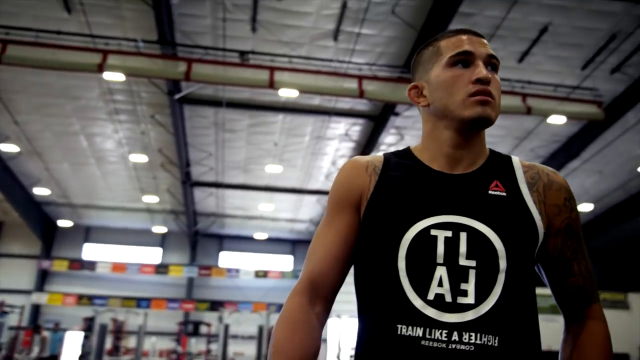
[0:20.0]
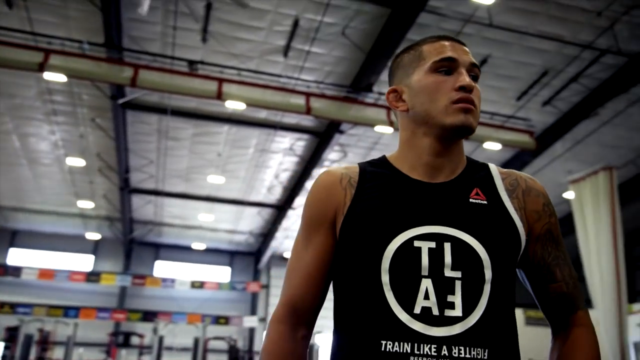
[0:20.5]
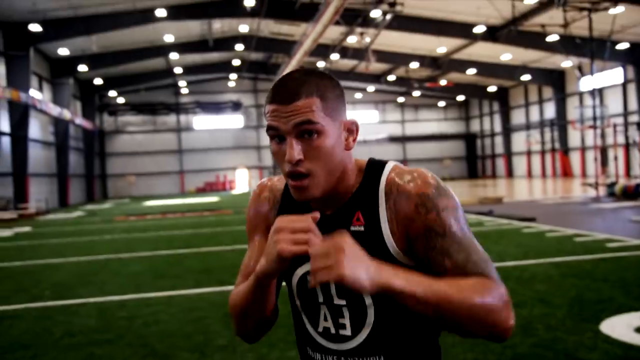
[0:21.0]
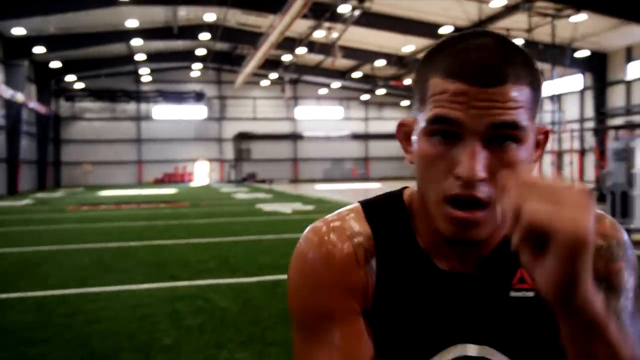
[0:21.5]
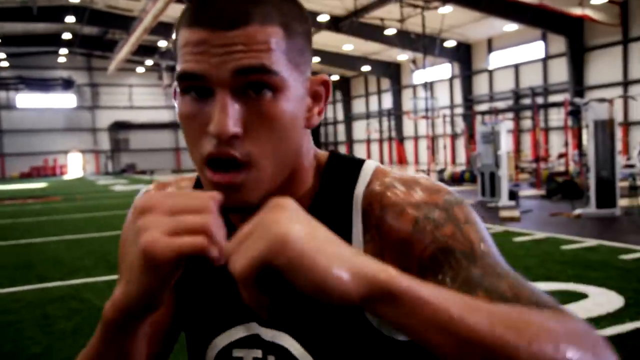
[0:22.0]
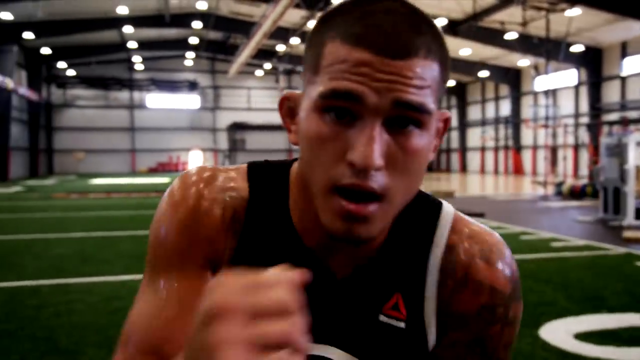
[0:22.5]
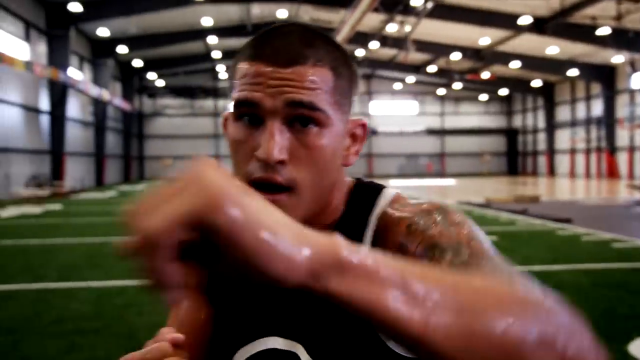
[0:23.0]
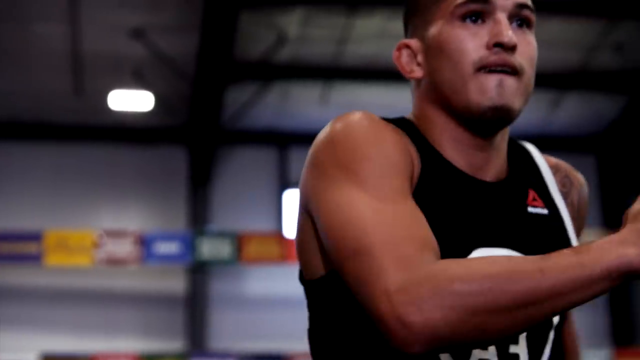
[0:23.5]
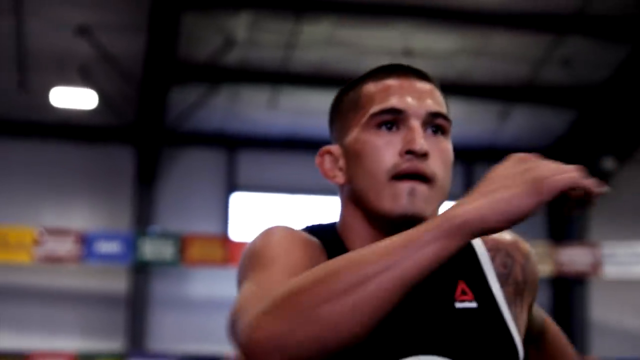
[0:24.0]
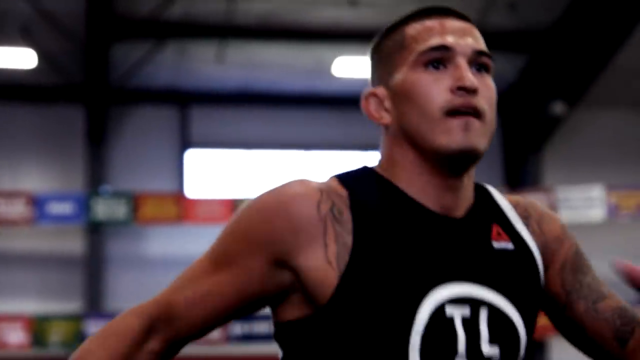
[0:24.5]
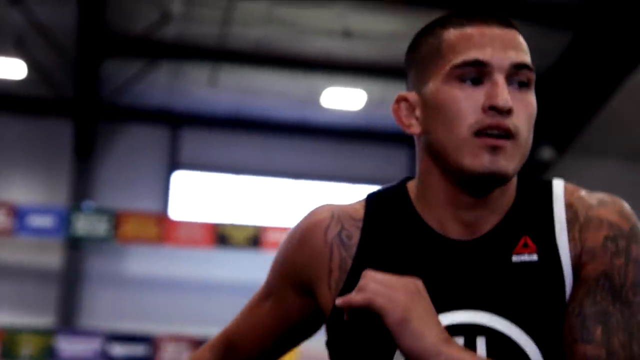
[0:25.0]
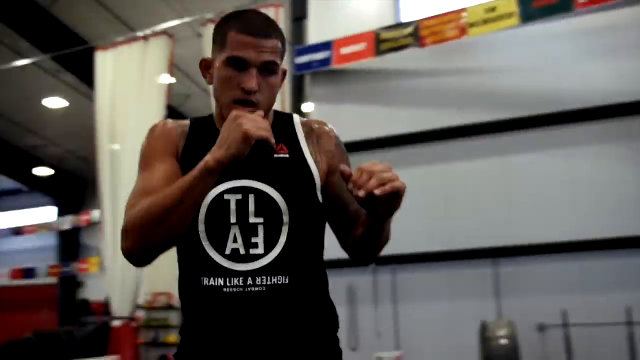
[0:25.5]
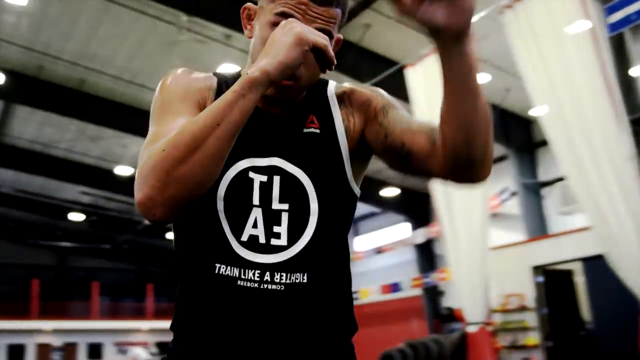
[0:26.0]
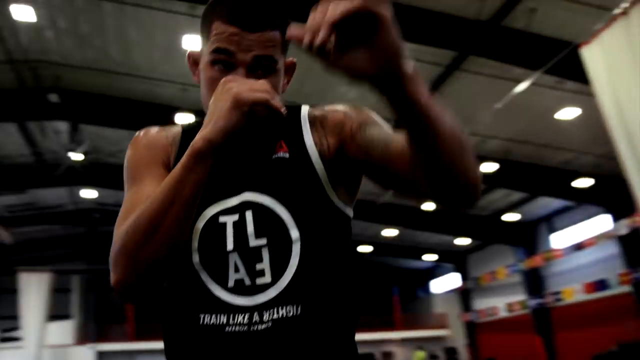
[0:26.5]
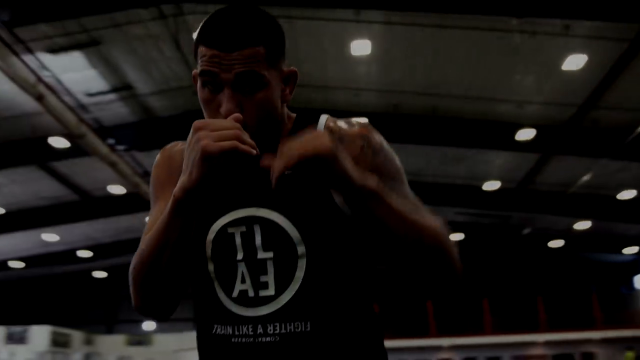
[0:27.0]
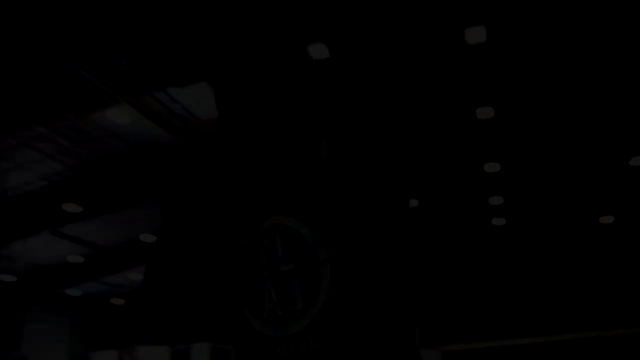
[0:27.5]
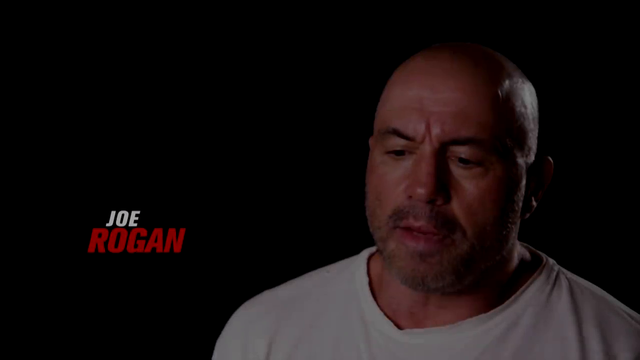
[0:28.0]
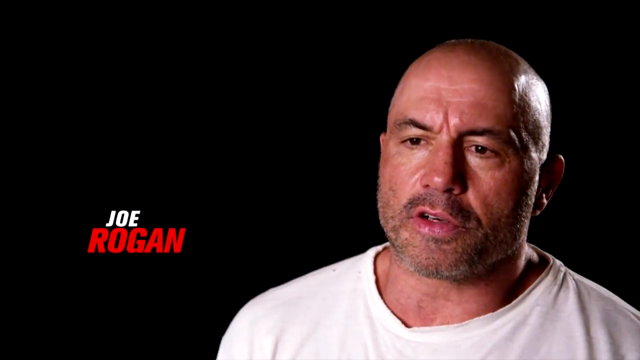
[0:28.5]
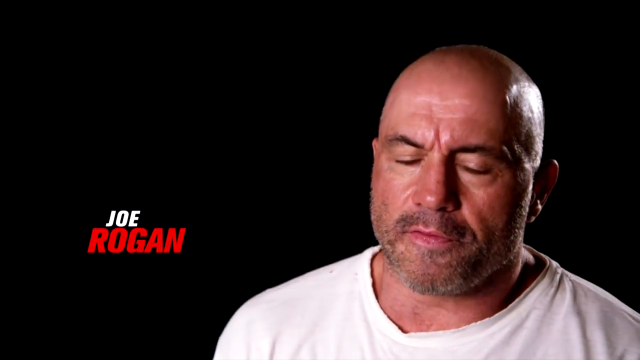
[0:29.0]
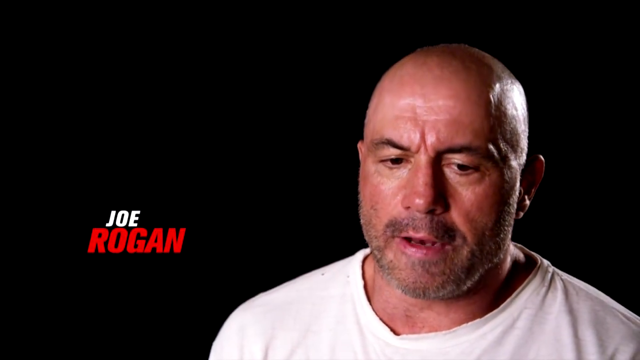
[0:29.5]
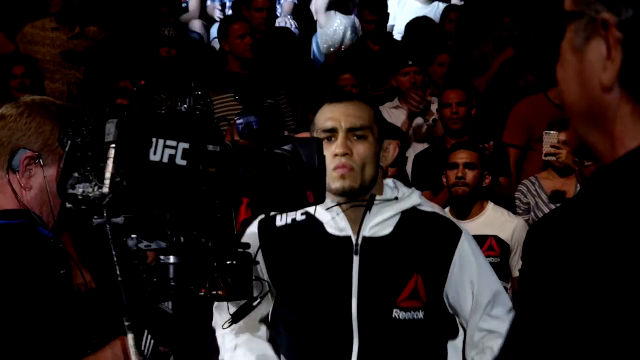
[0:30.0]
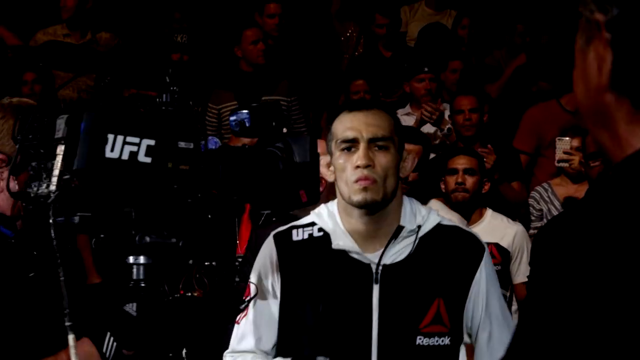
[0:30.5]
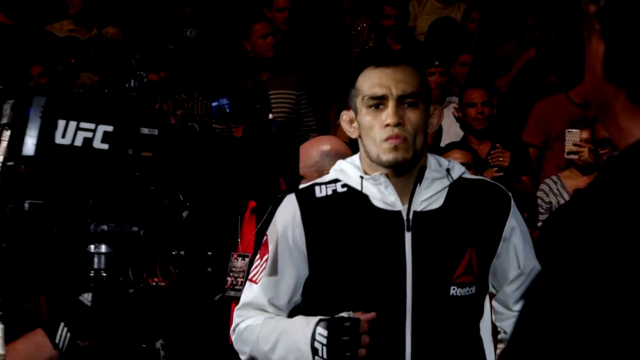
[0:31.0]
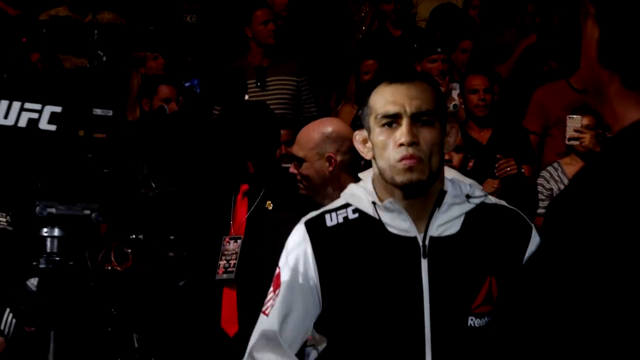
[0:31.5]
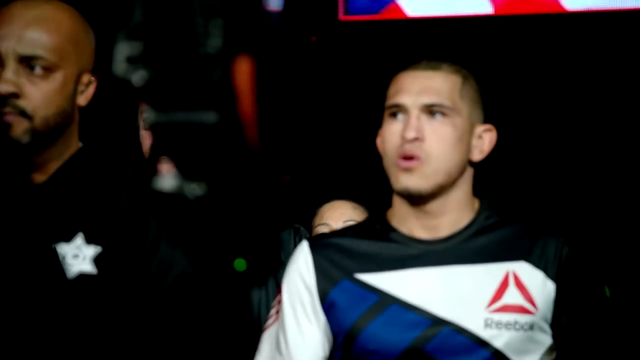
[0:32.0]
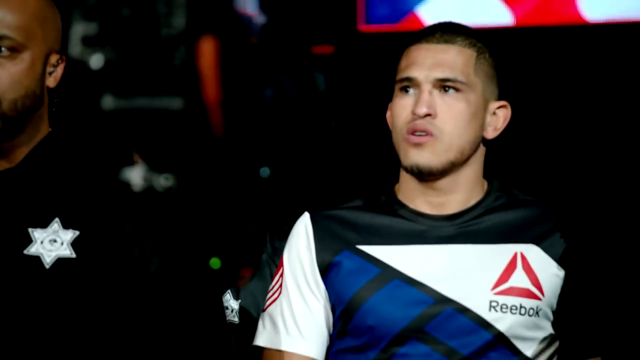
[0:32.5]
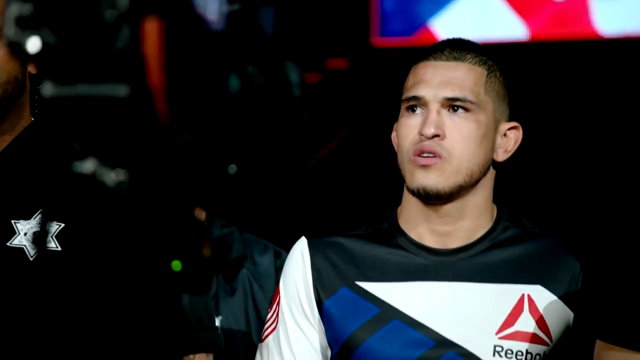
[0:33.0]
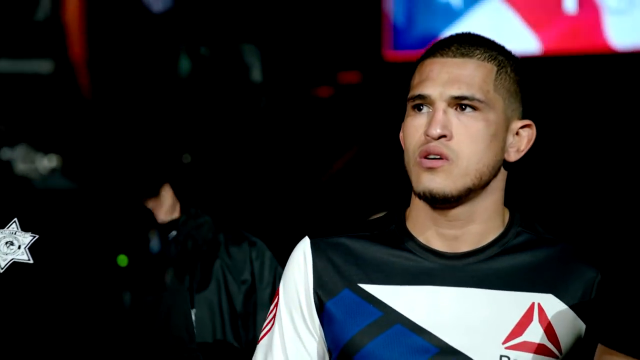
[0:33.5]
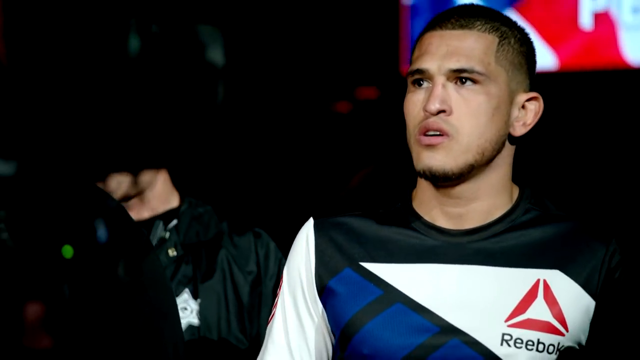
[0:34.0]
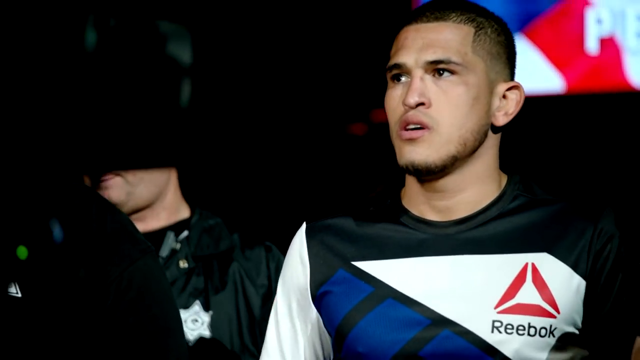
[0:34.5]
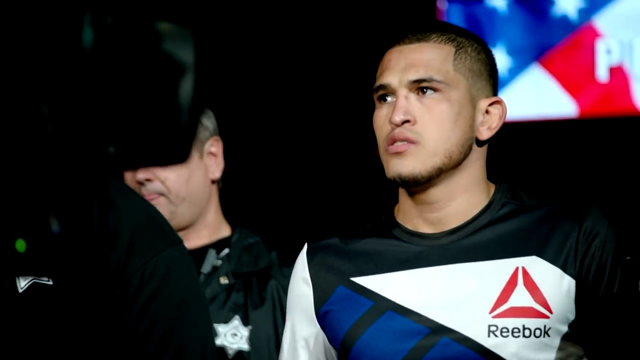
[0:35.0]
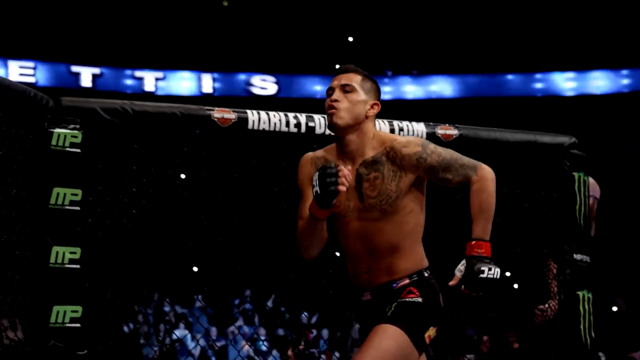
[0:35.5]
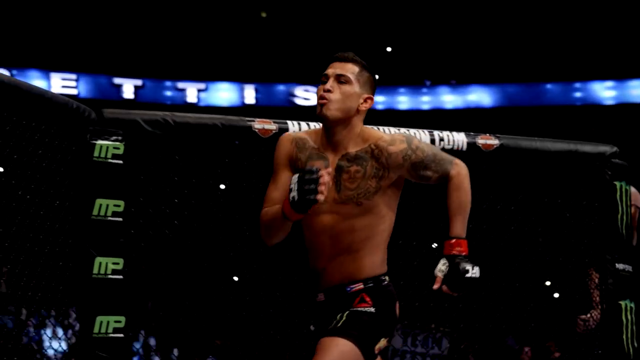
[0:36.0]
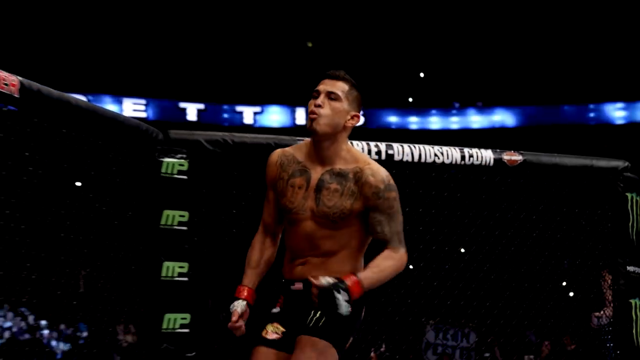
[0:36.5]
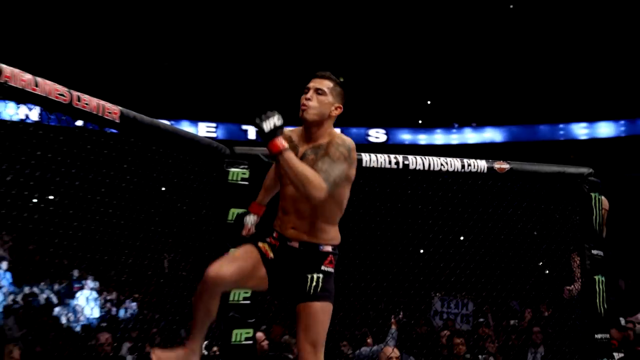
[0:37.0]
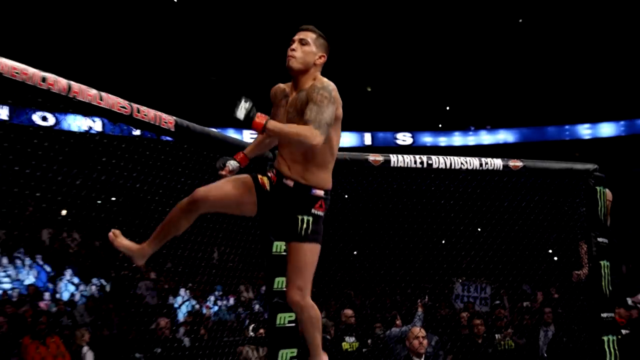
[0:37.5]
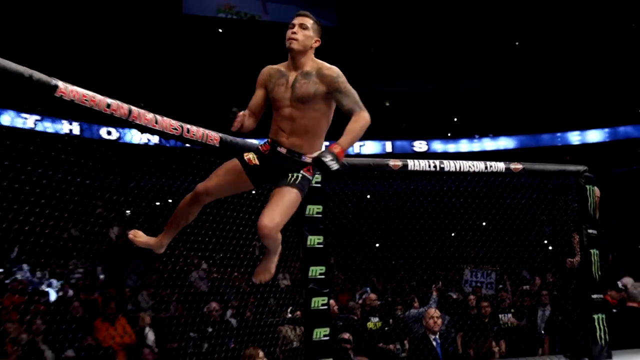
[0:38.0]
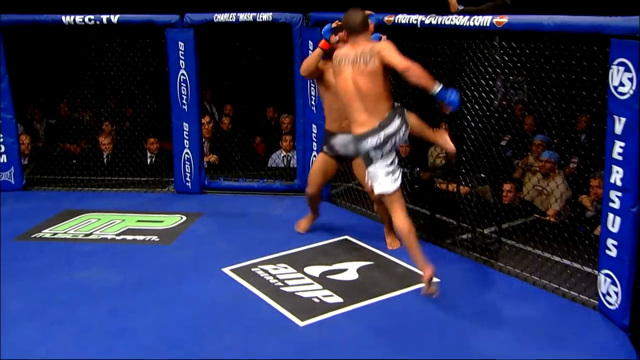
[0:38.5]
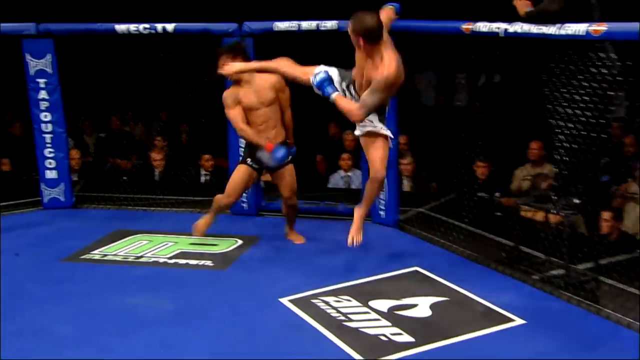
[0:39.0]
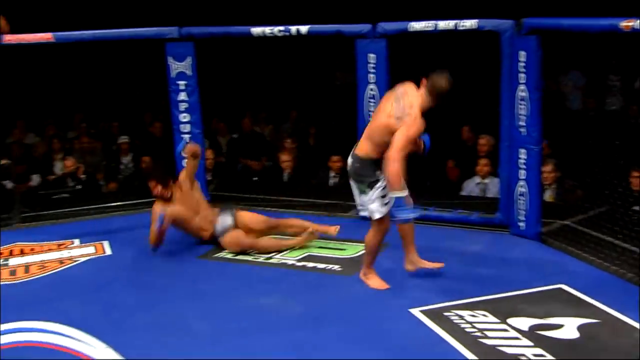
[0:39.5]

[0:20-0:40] A man who looks Arab and probably about 25, wearing a black tank top with "TLAF" in a white circle on it, punches the air as if showing off. The video cuts to Joe Rogan, kind of a 60-year-old chubby white man with brown hair and a bald head. It then returns to the Arab man, now shirtless with tattoos on his chest; he is a UFC fighter, possibly Khabib, and he shows off for the camera. Different clips show him running around, bouncing off walls and kicking people in the face, including kicking two men in the head. He is fit rather than muscular, with black hair and ears that stick out kind of far.